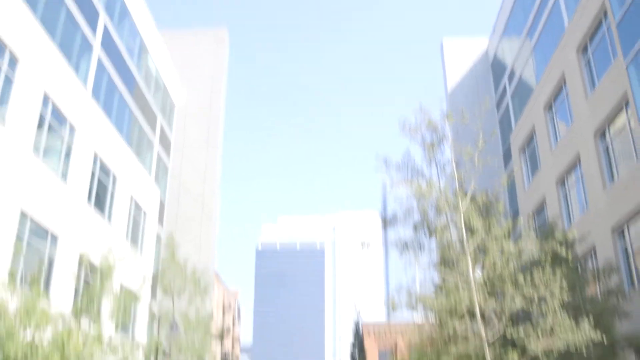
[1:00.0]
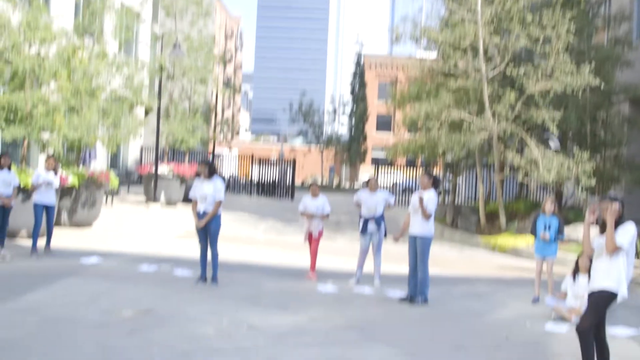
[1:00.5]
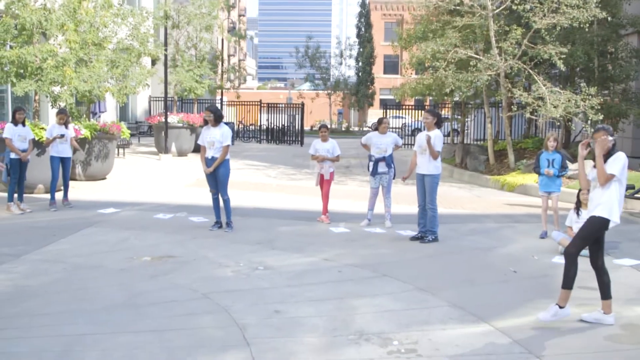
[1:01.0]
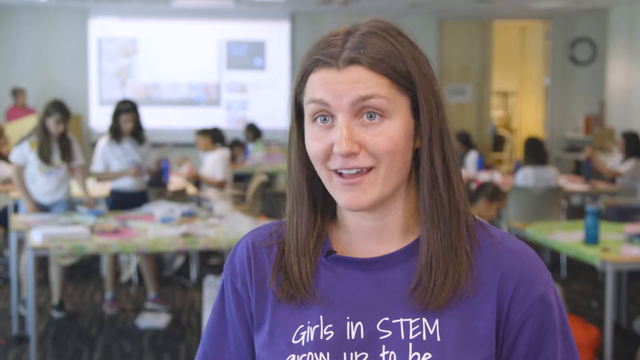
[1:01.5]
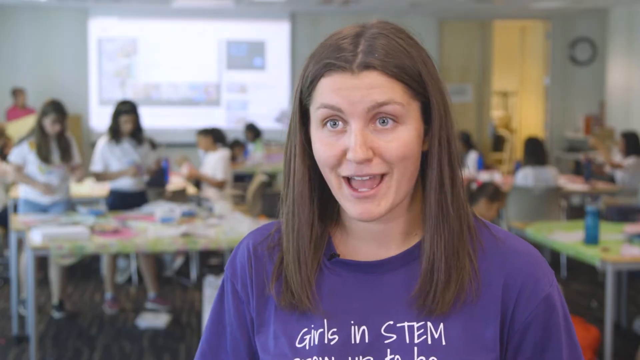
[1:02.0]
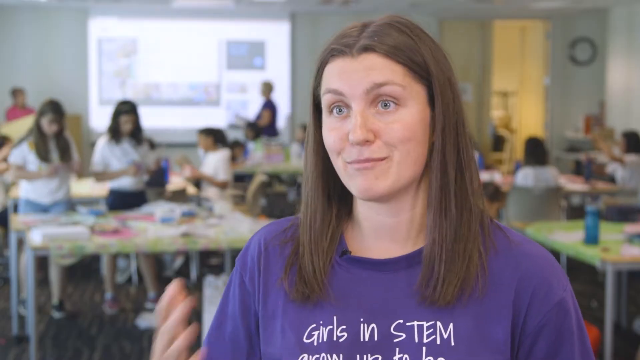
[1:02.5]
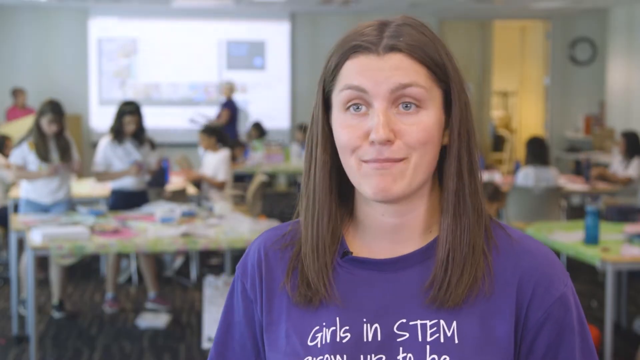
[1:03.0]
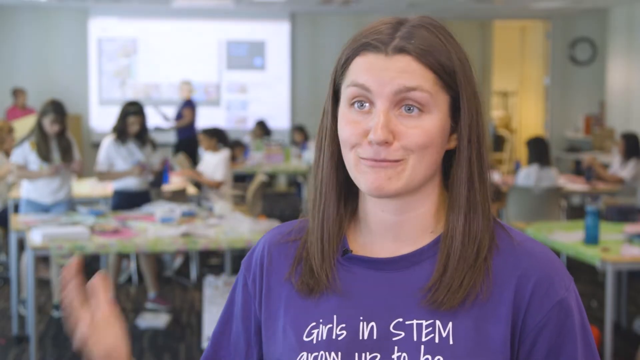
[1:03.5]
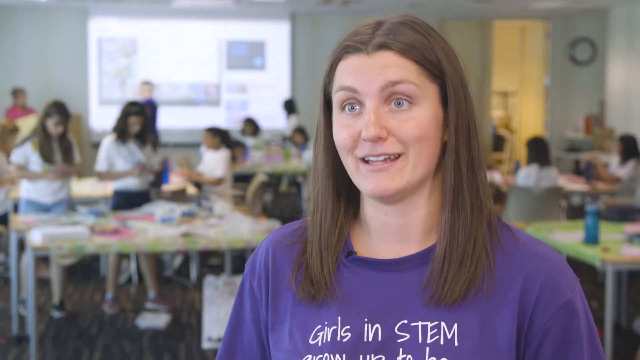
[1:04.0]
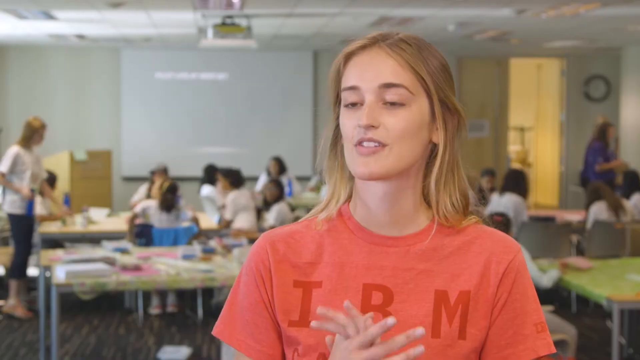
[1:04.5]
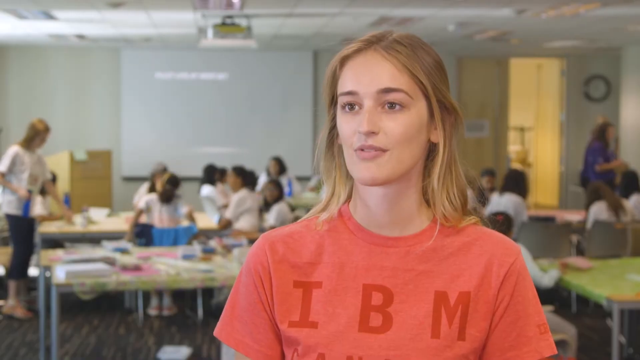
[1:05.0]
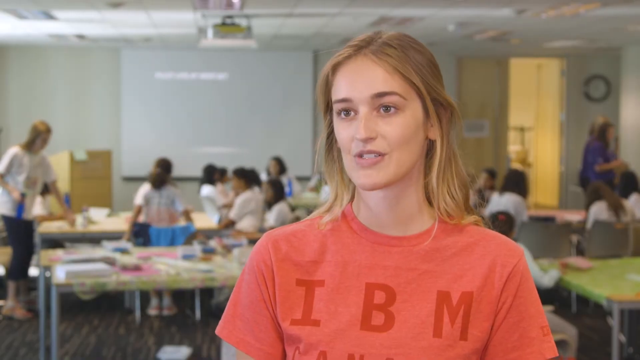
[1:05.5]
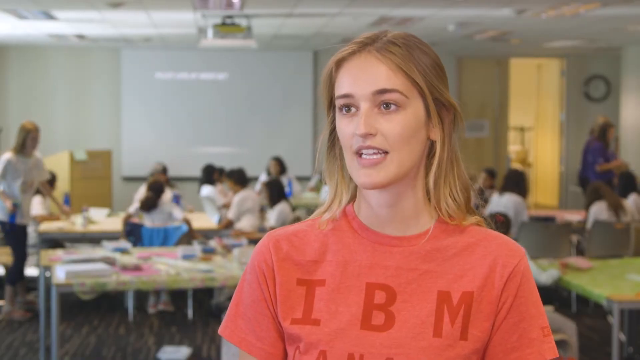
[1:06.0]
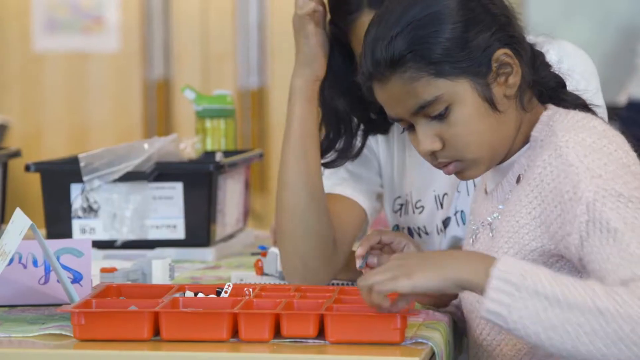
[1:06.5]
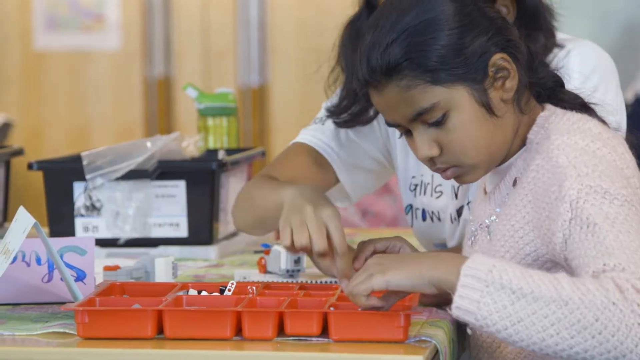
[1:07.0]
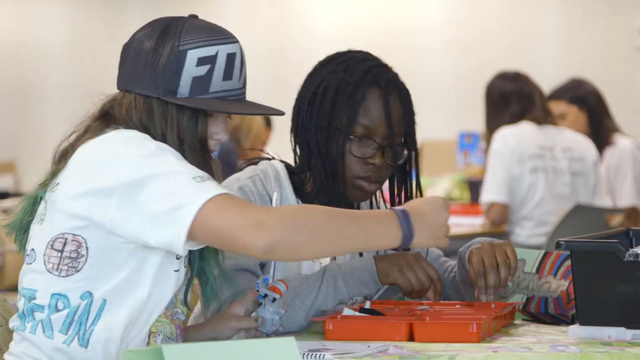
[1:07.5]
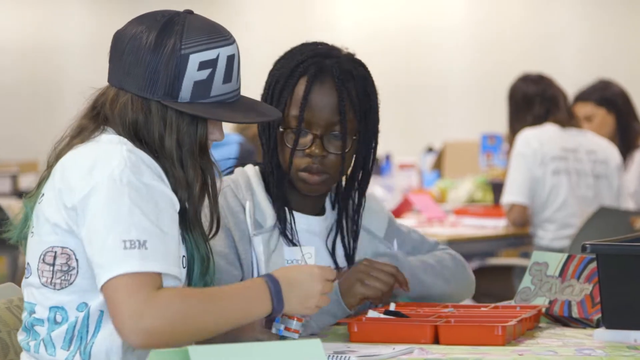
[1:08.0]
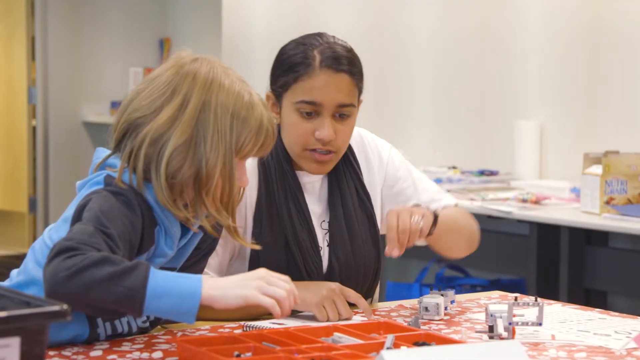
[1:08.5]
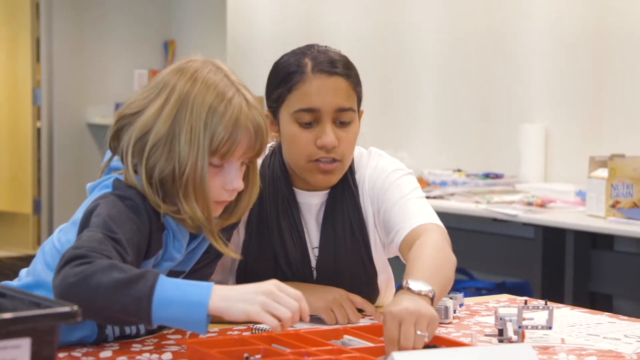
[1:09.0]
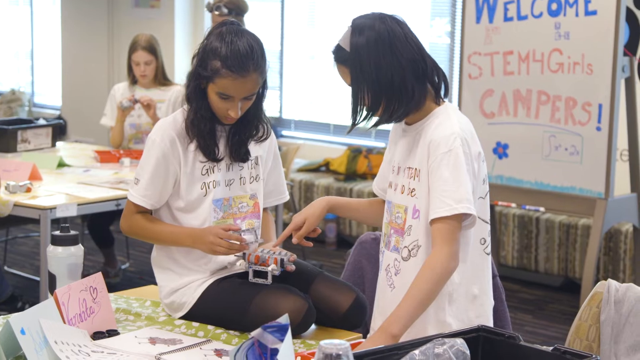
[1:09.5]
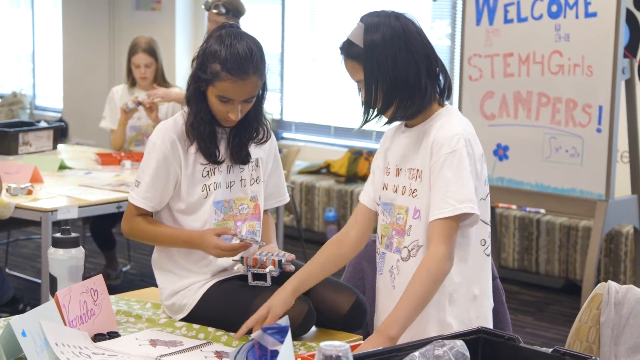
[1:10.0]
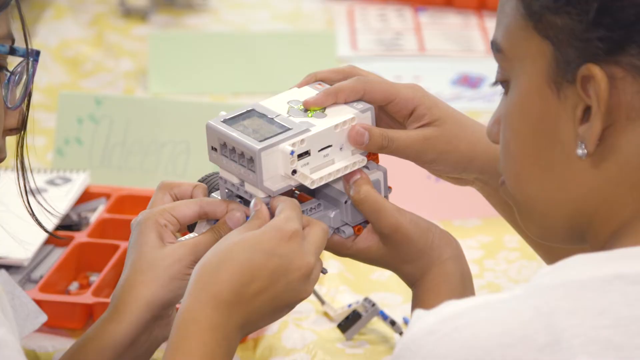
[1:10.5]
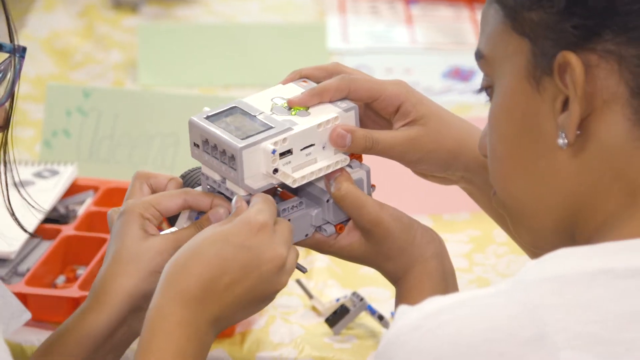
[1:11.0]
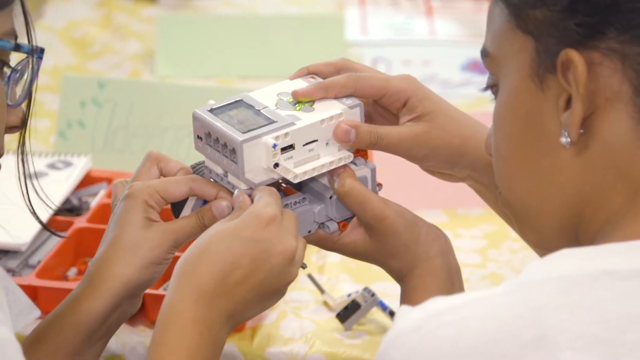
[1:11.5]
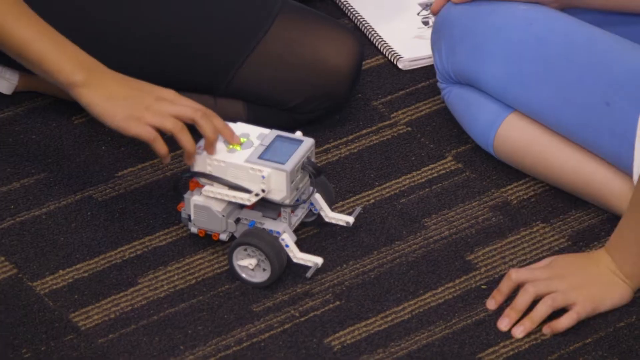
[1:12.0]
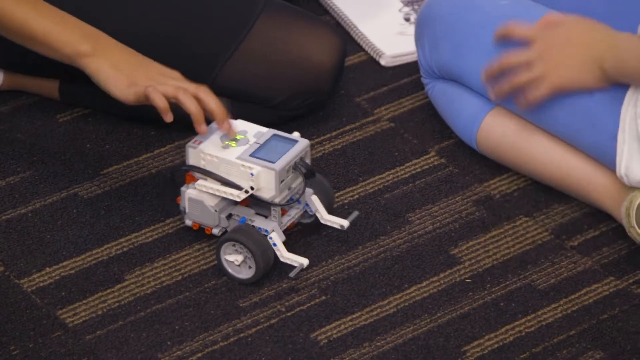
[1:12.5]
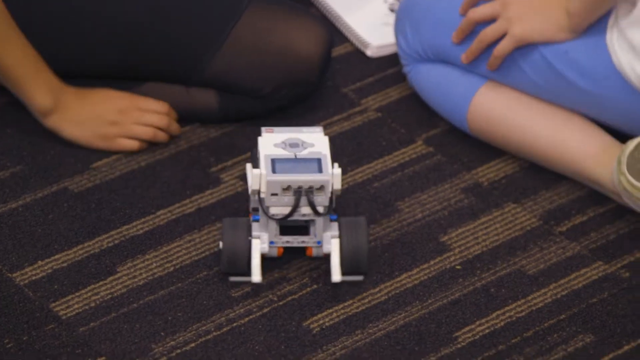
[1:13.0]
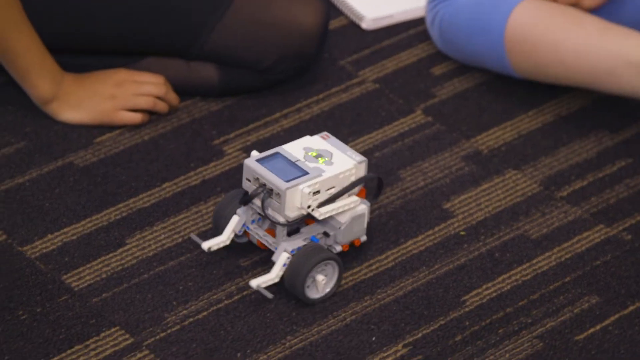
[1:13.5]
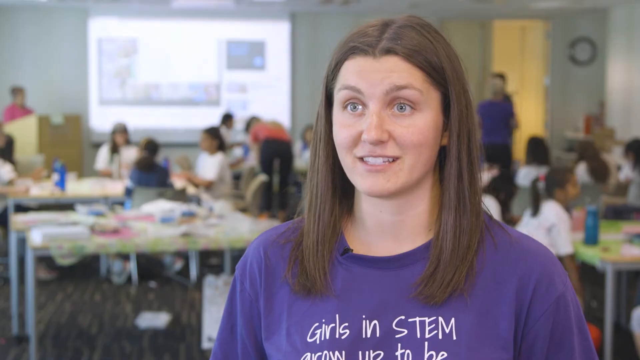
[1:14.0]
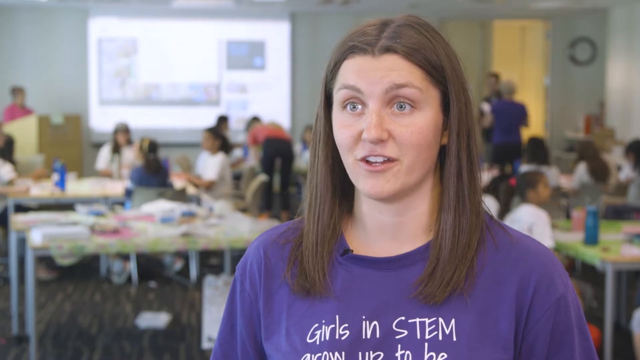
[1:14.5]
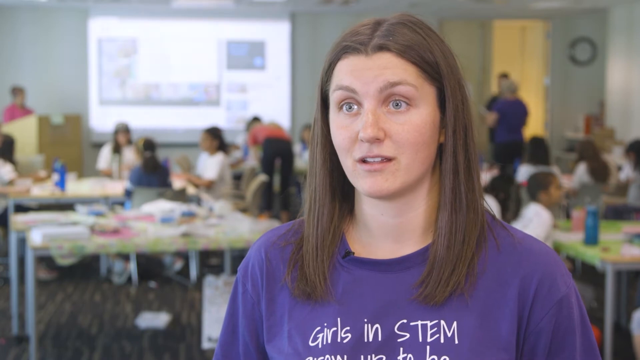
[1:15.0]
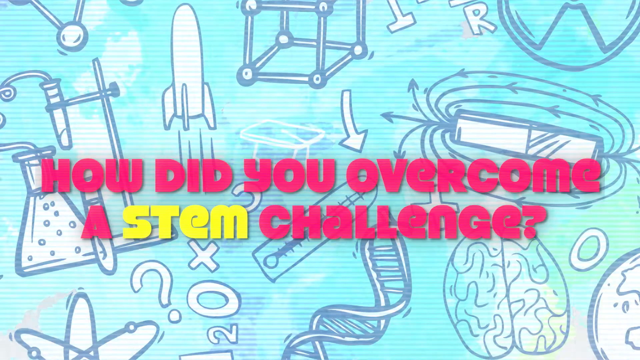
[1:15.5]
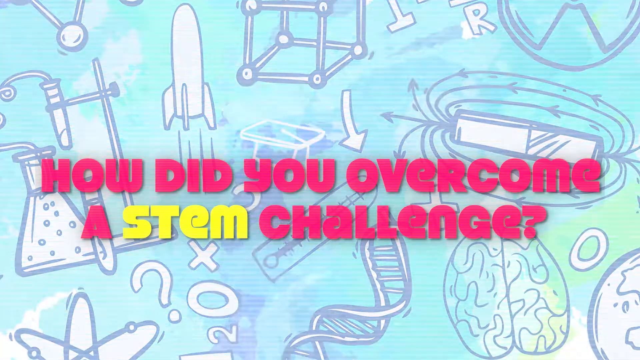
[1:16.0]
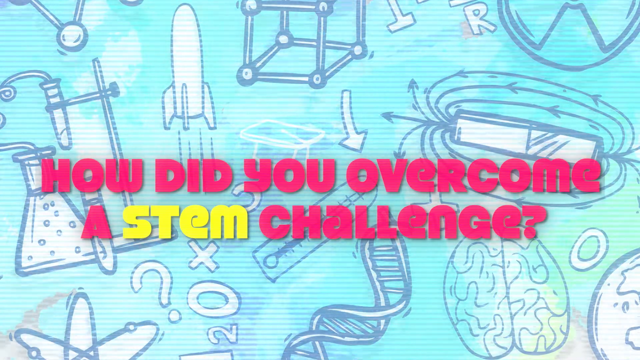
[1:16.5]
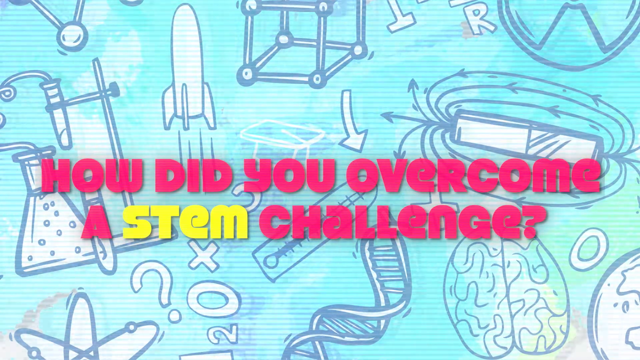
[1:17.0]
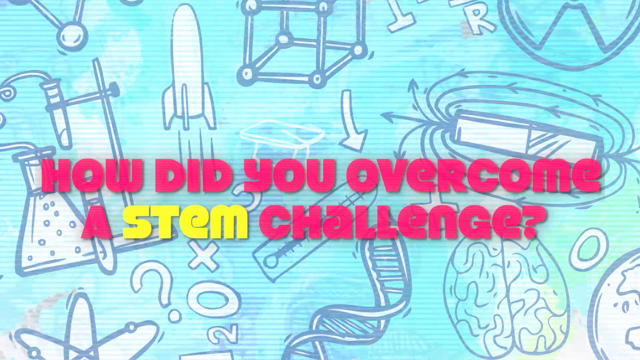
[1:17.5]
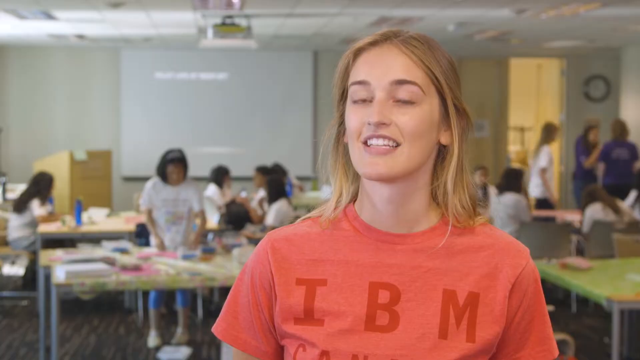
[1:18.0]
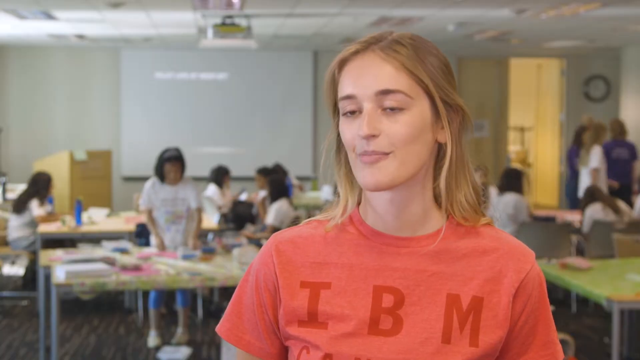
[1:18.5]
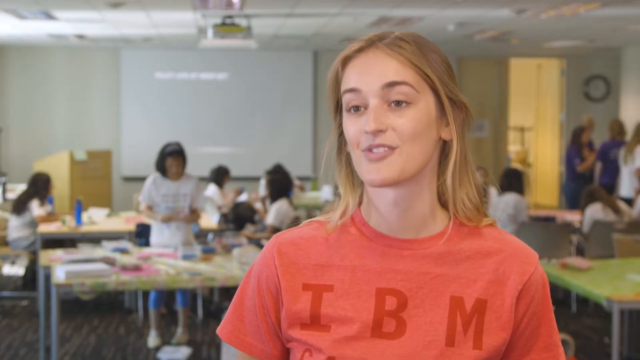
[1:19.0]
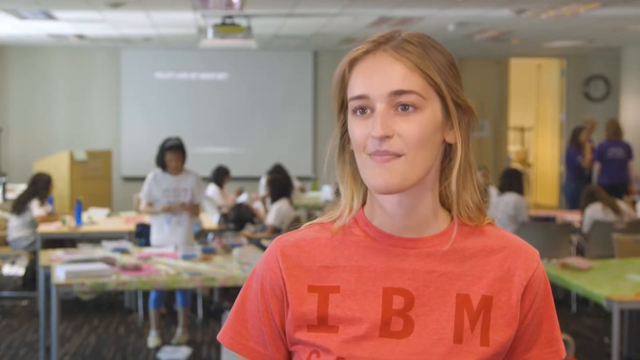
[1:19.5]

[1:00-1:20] Outside two IBM buildings, the view looks up into the air, with a large green tree on the right of the scene. The camera pans down to the crowd outside the buildings, where many people are milling around. Inside a classroom there are many elementary-age girls. The main speaker, a white woman in her twenties with long dishwater blonde hair and bluish eyes, wears a purple t-shirt that says "girls in STEM"; she is enthusiastic and waves her right arm in a circle as she explains something. The camera changes direction to the kids working with their materials: some have computerized materials, while others mix liquids. A screen then says "how did you overcome a STEM challenge?" over the same light blue pencil drawing. The blonde girl in the salmon t-shirt that says "IBM" speaks to the camera. Outside again, kids mix Alka-Seltzer and water, shake it up and launch little plastic bottle rockets into the air. Back inside the classroom, the two girls talk while scenes show kids putting together electronic gadgets and mixing liquids and chemicals.